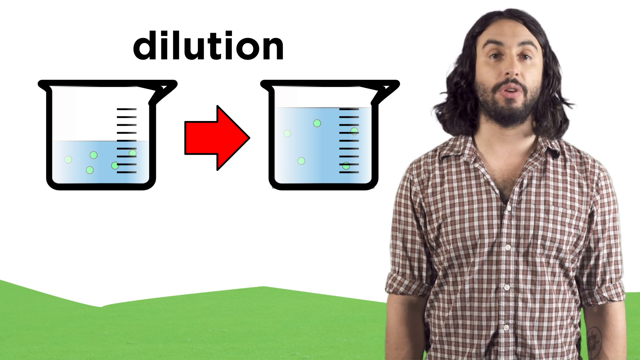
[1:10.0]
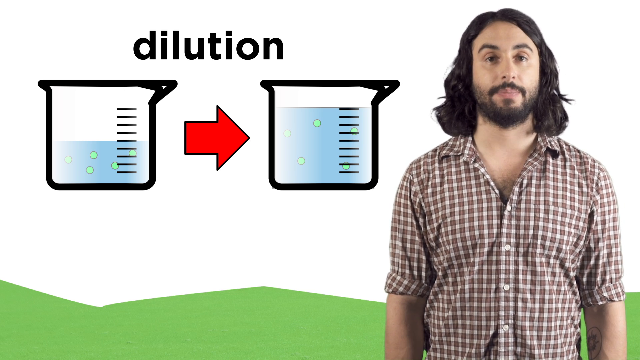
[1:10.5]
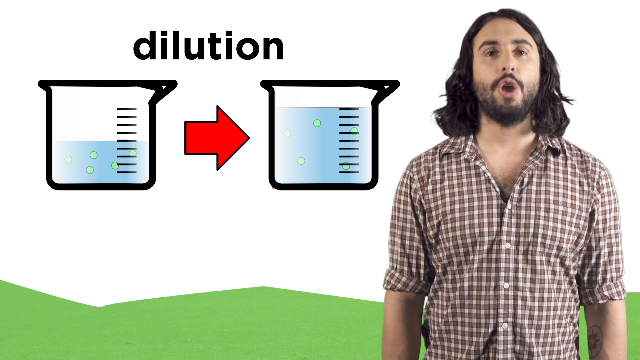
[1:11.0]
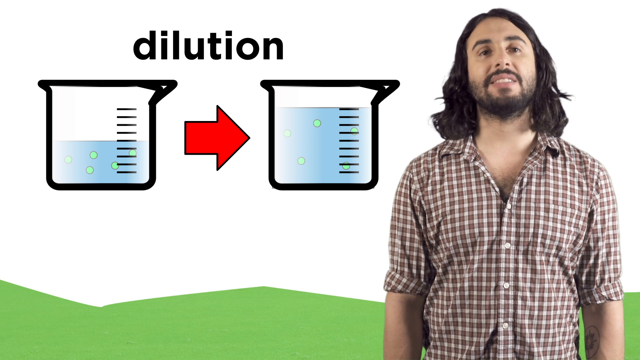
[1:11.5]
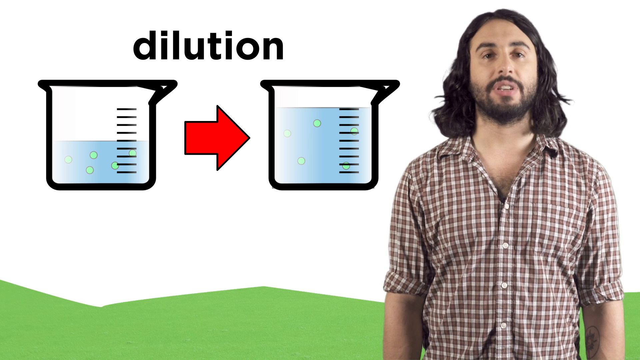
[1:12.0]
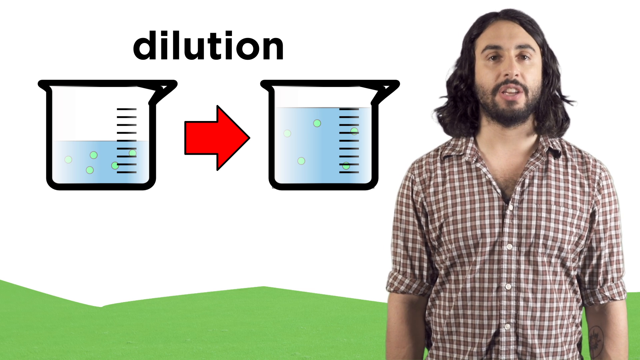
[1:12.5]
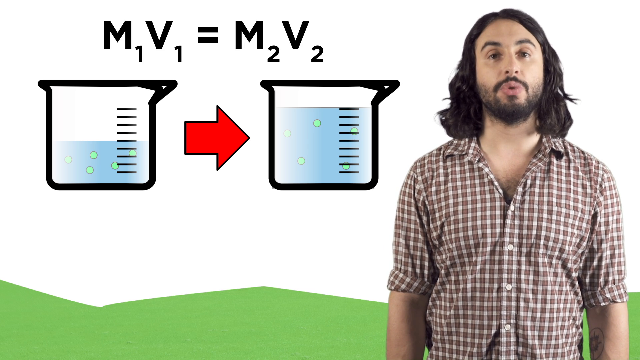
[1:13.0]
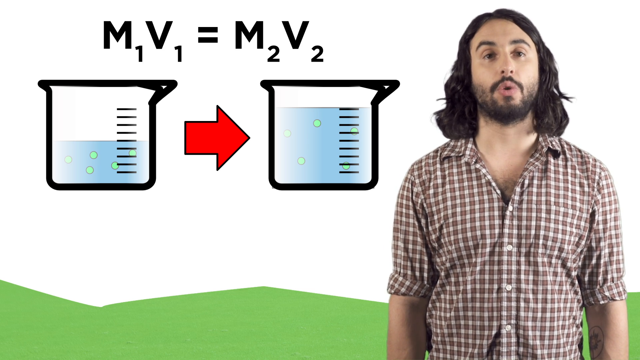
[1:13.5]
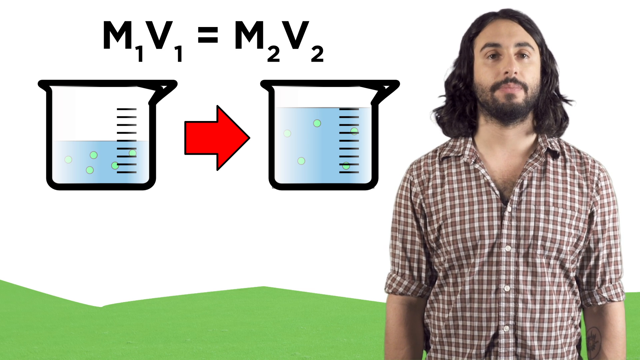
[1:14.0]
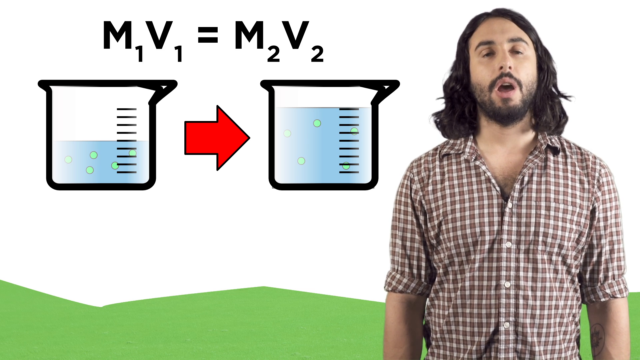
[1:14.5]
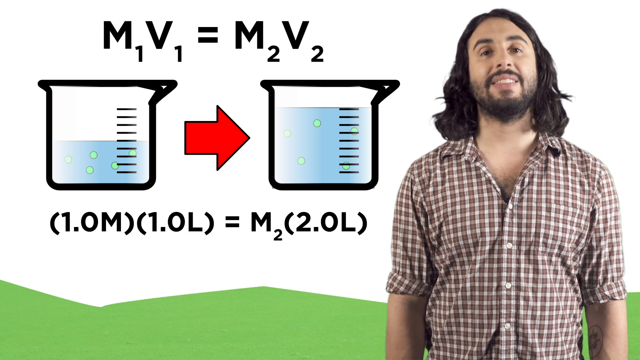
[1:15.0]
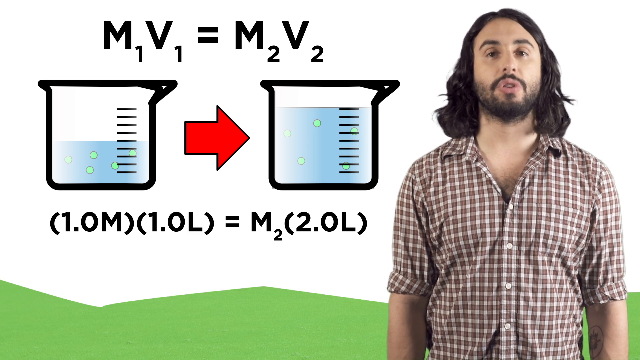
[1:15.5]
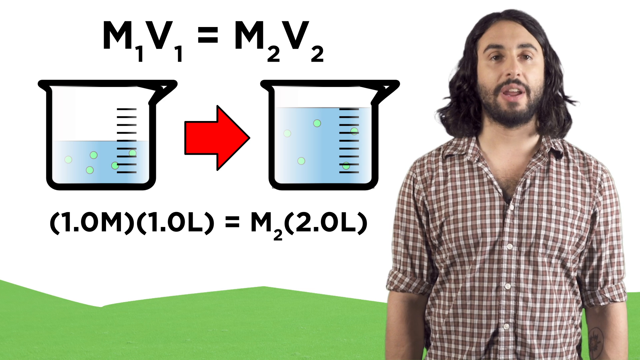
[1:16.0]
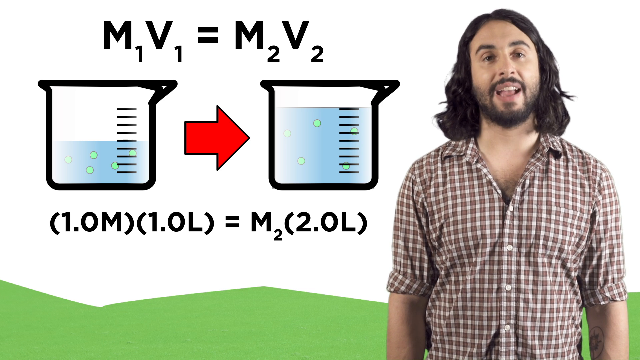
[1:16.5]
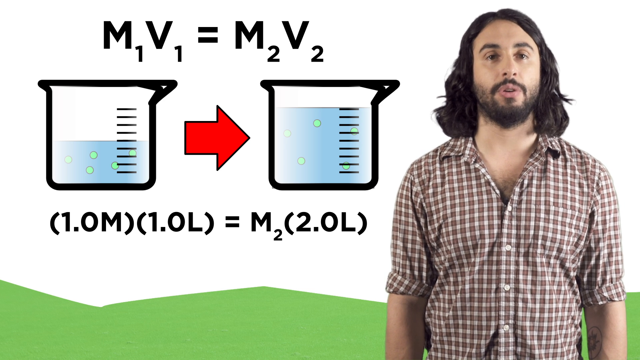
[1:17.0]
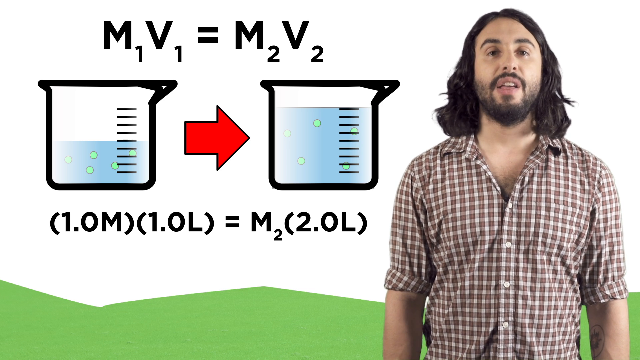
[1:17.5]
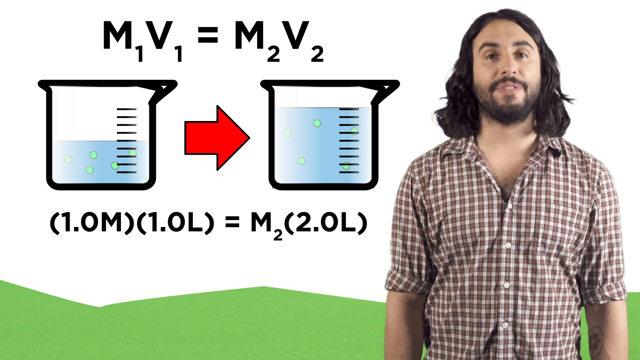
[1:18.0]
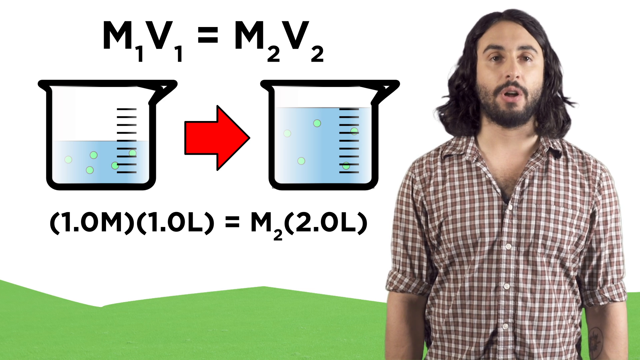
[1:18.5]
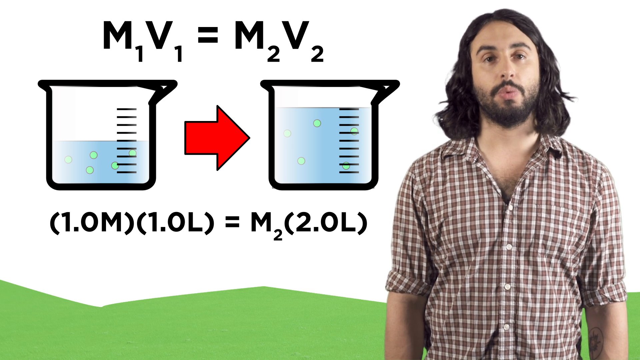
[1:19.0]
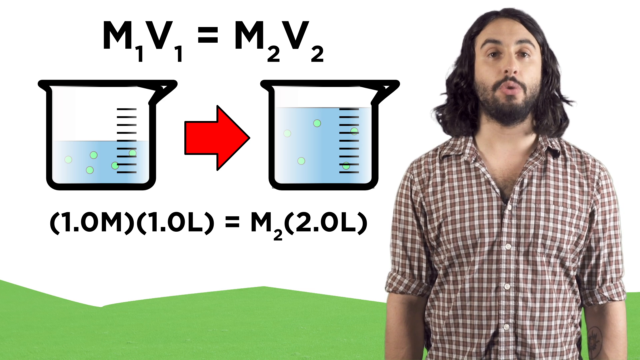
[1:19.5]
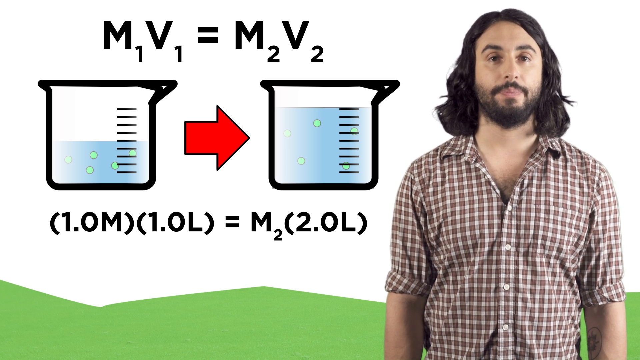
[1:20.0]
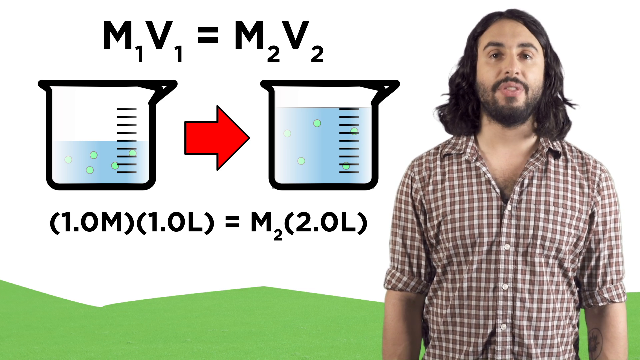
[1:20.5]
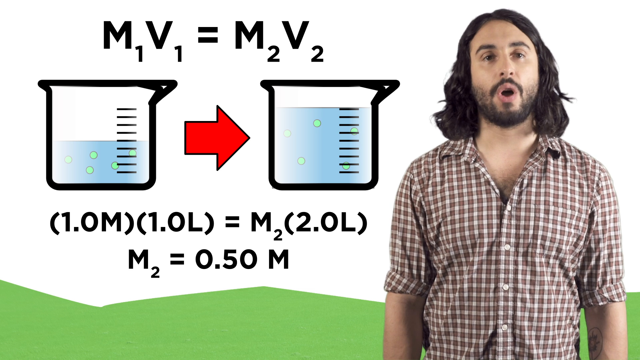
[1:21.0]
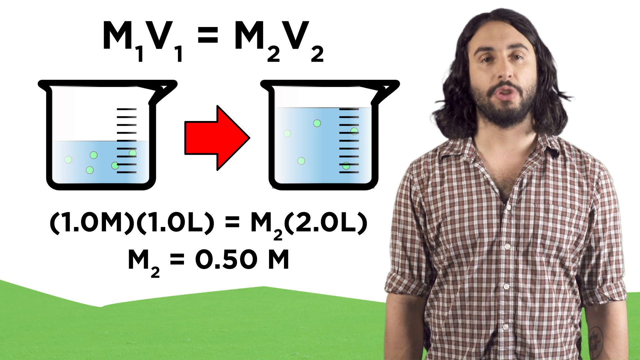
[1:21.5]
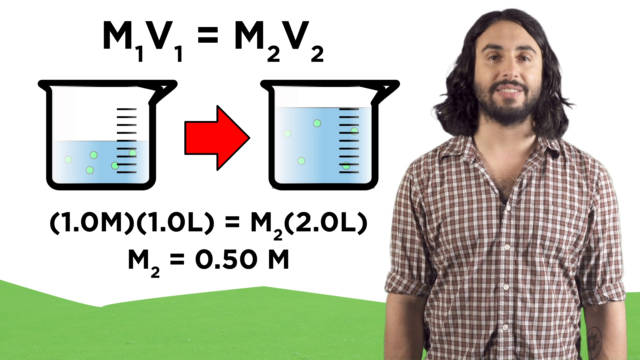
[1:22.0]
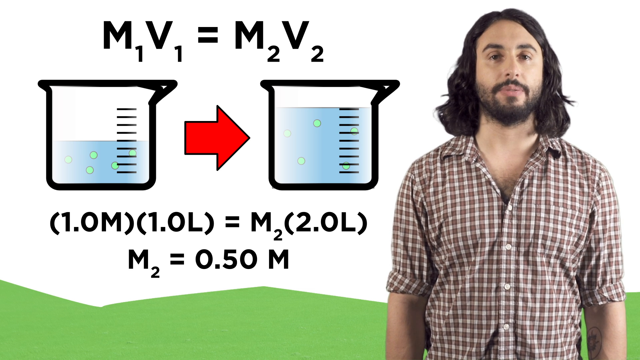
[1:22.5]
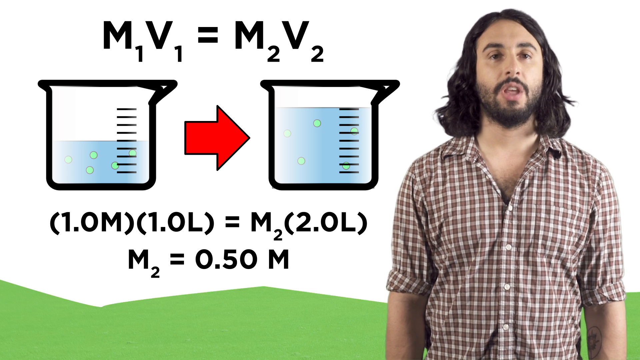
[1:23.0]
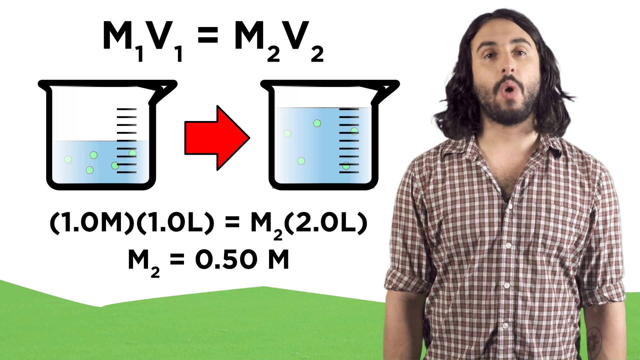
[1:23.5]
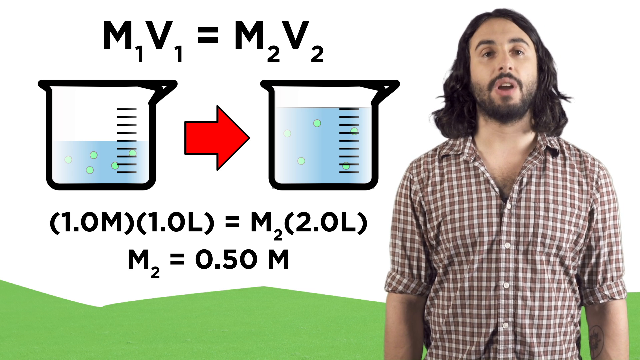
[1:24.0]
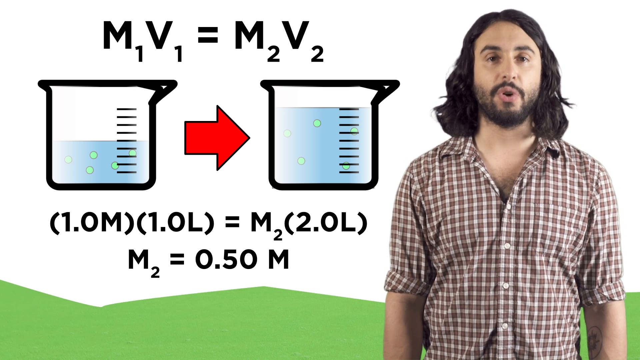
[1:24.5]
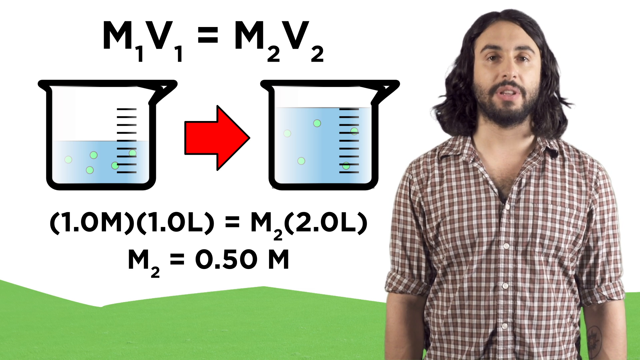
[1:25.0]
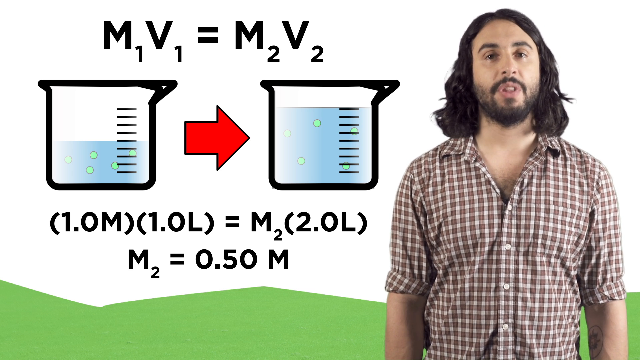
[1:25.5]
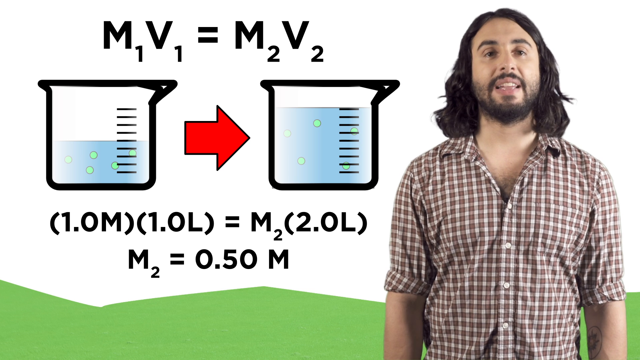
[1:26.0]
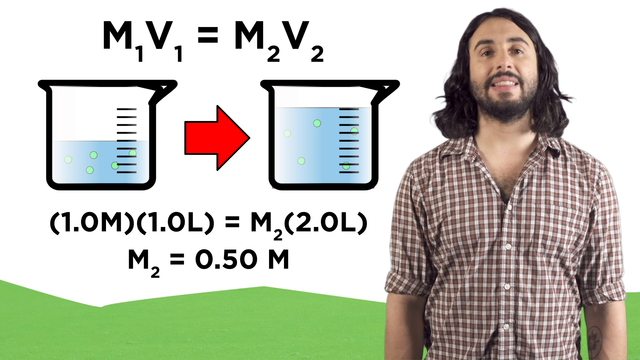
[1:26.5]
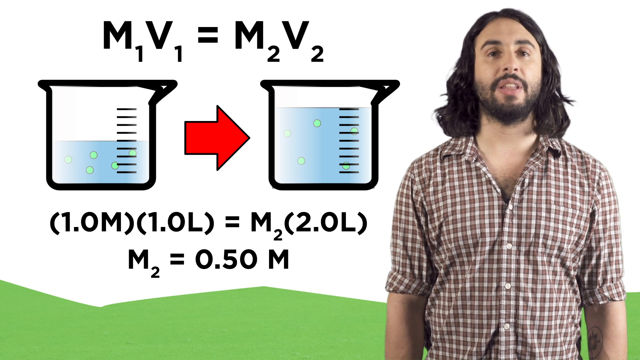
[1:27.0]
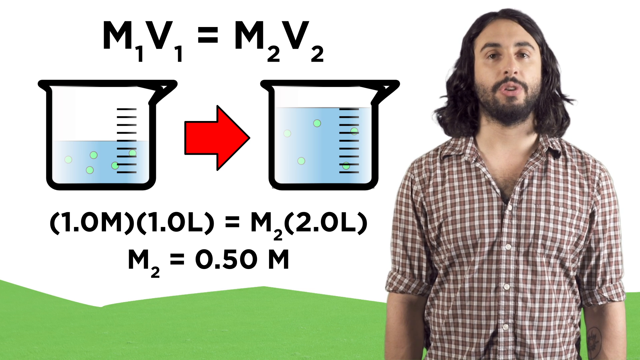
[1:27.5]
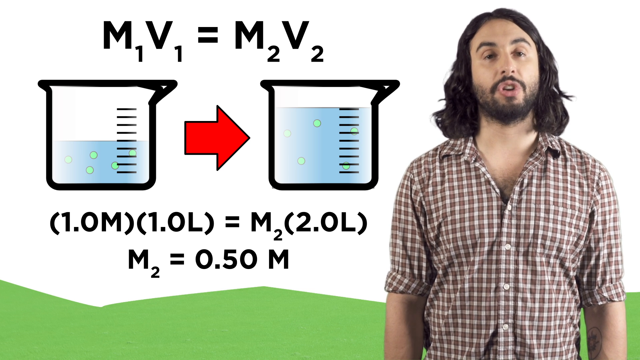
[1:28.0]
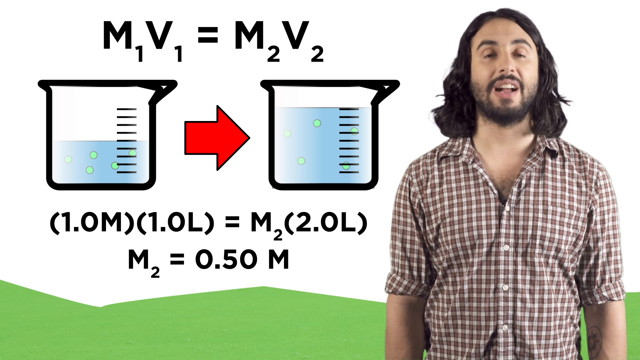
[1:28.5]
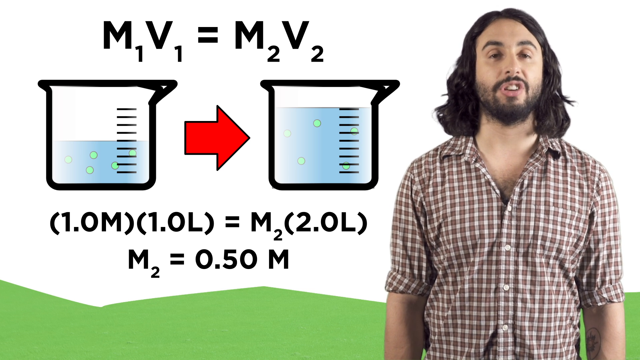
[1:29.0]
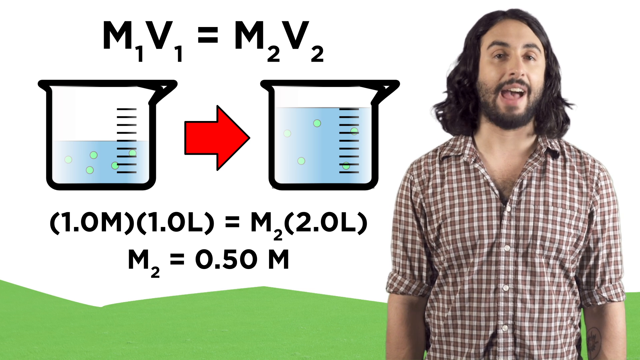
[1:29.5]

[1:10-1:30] A man wearing a brown and white plaid button-up shirt, with long black hair down to his neck and a black beard, is seen from the stomach up on the right side of the screen. There is a large white background with a green trim at the bottom that goes up and down. In the top left of the screen is the word "dilution" in black, and under it are two drawn beakers. The left beaker has about ten black measuring marks on its right side and is filled with blue liquid to the halfway mark, with five green bubbles in the liquid. To its right, a red arrow points to the right beaker, which also has ten horizontal black marks on its right side but is filled all the way to the top marker, with about four green bubbles. The man talks, and the word "dilution" changes to the equation "M1V1 = M2V2", with subscripts. Below the two beakers appears the equation "(1.0 M)(1.0 L) = M2(2.0 liter)". The man continues to talk and look at the camera, and another equation pops up beneath it: "M2 = 0.50 M". The man continues to talk.